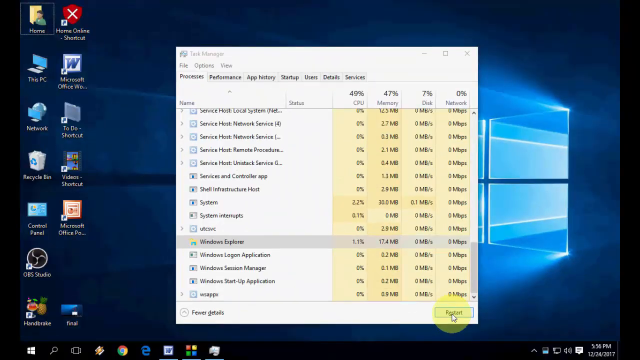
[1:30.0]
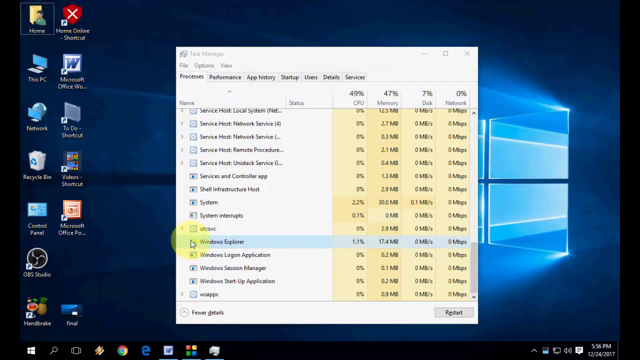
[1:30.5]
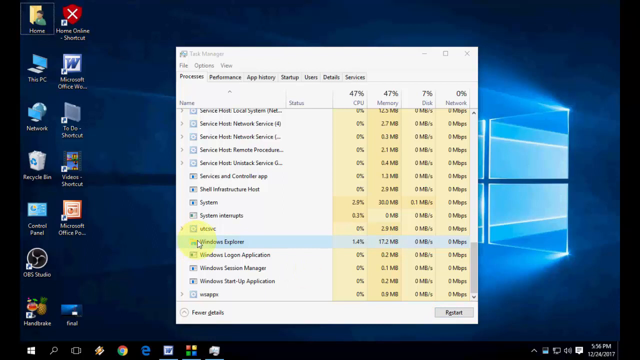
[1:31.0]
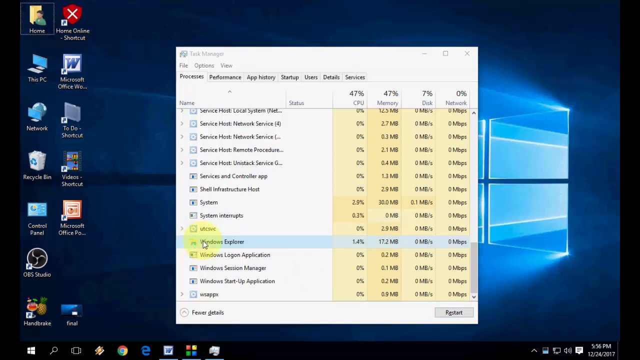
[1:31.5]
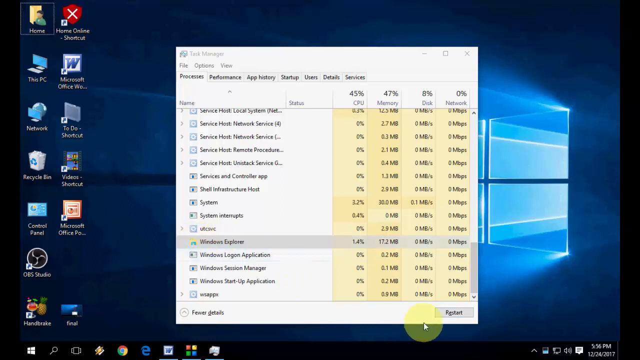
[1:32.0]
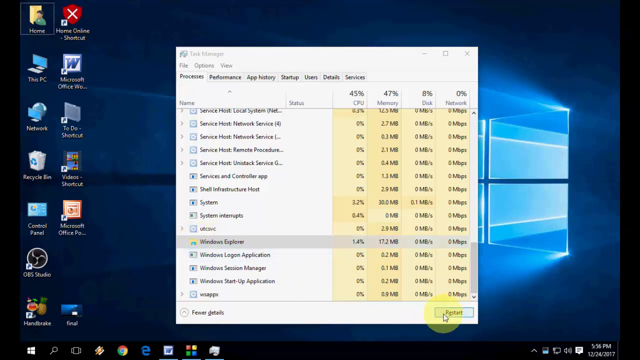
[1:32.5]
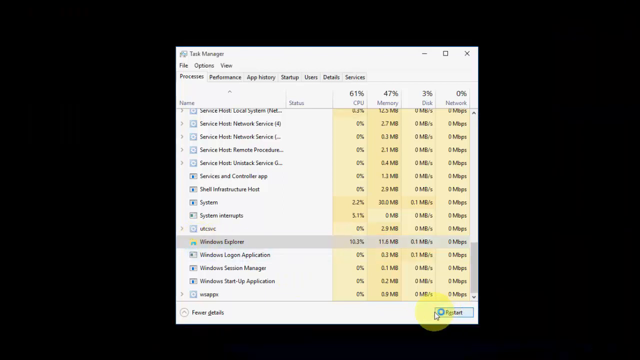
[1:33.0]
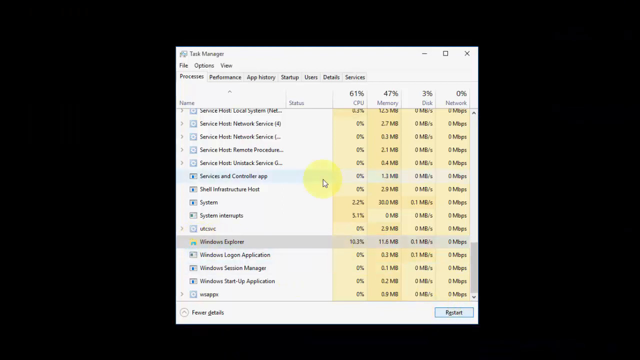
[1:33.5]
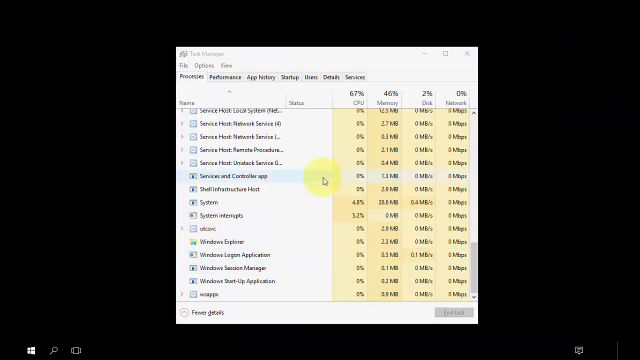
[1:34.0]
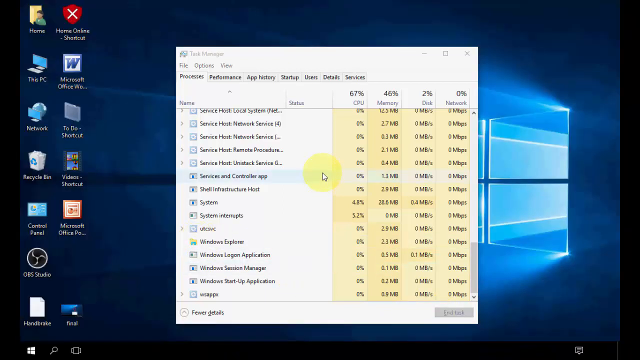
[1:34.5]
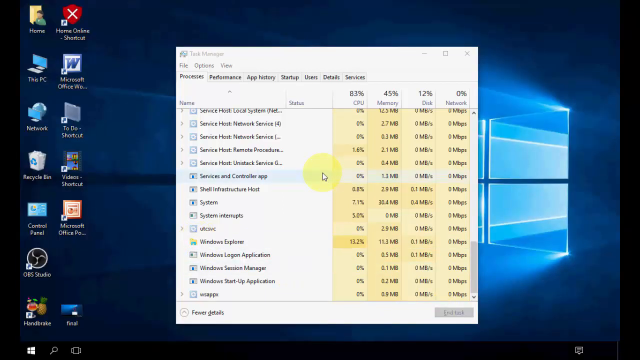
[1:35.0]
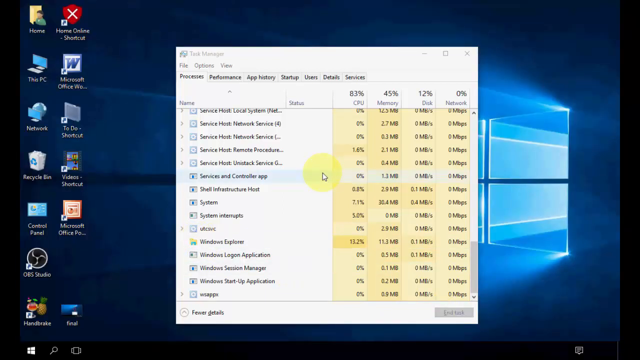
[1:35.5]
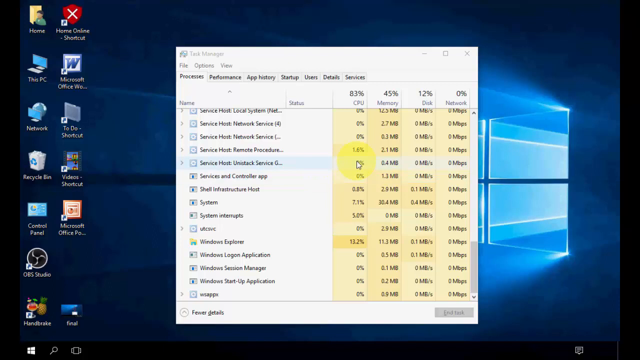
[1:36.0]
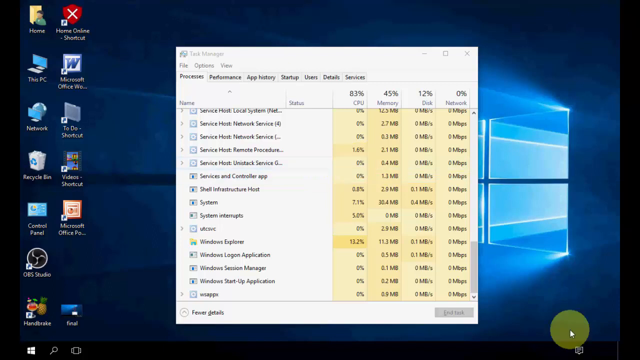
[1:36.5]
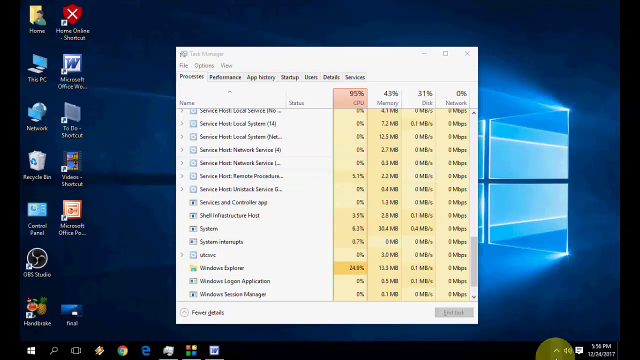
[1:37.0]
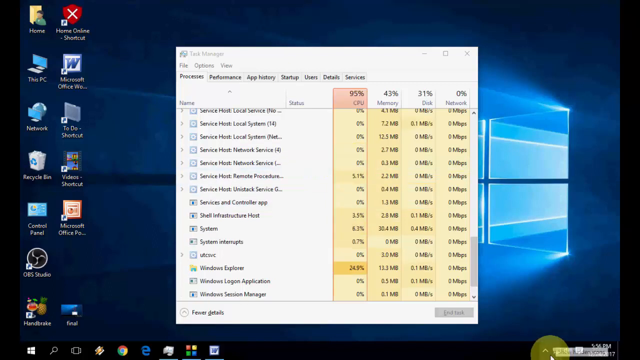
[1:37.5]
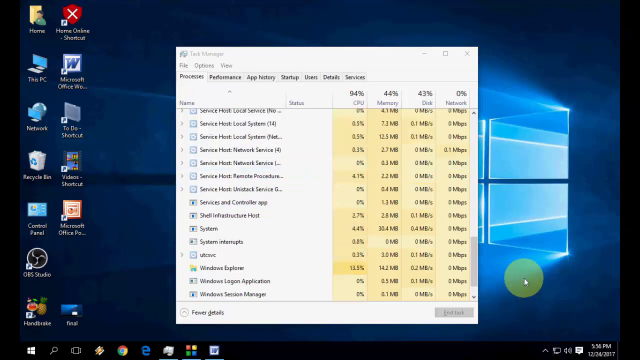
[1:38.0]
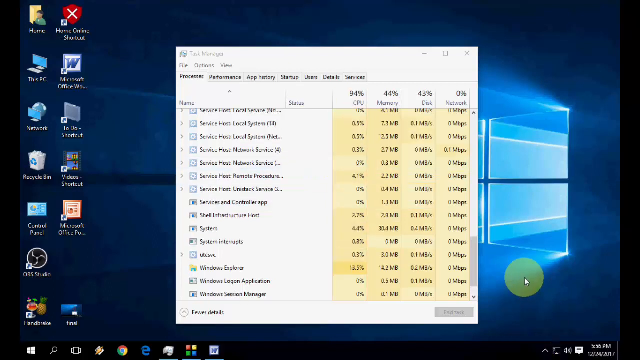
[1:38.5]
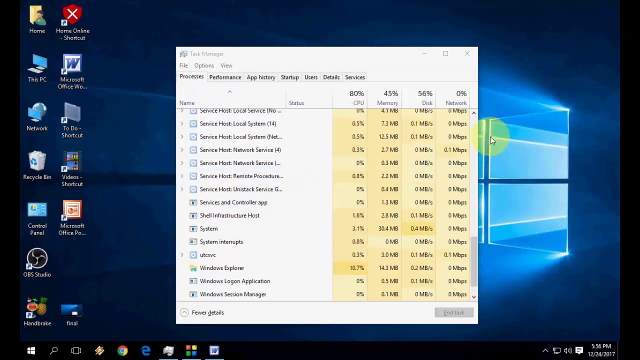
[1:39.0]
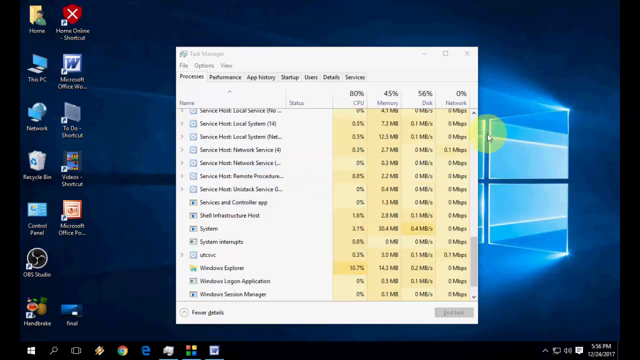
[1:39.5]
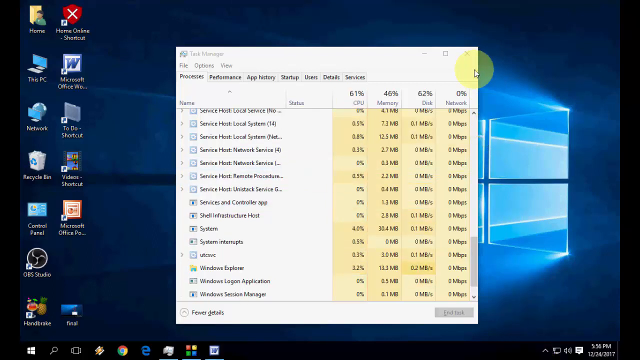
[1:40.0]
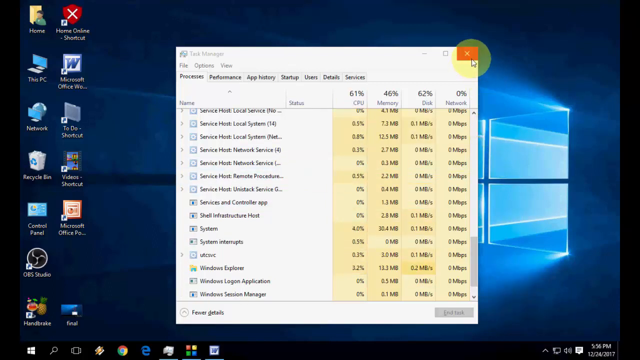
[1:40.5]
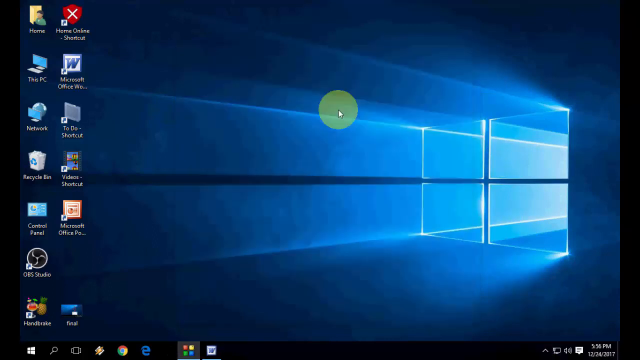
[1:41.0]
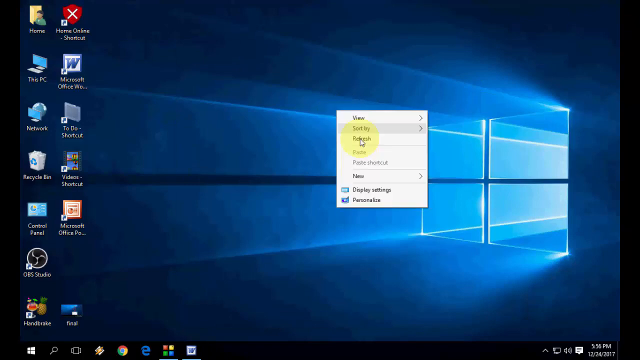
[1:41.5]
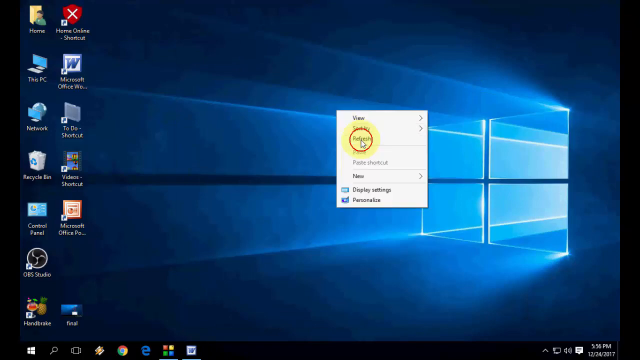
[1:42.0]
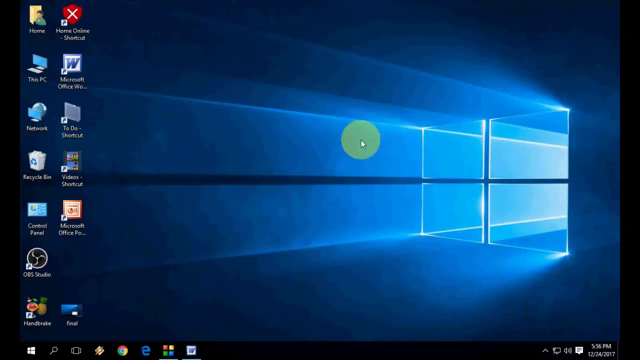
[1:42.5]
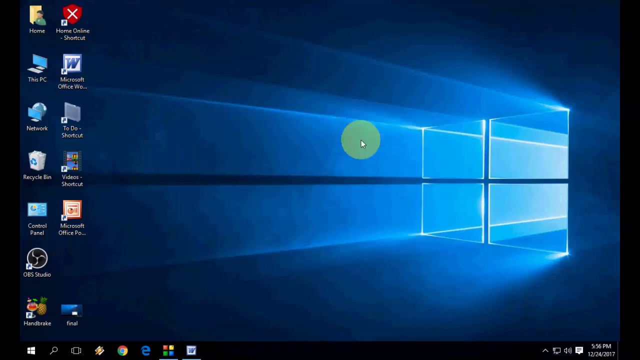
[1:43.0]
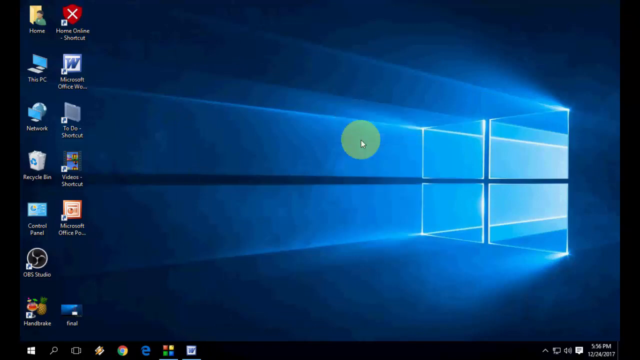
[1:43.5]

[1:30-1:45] The user selects the Windows Explorer service and clicks End Task. The background goes dark, then everything goes black, seemingly as the service restarts. He then clicks refresh on the desktop, showing that the process is operational again. This seems to be part of a tutorial on how to hide certain icons or show others.